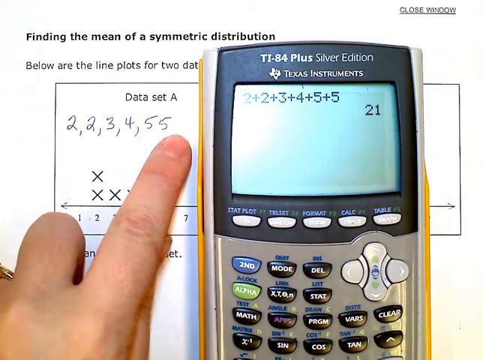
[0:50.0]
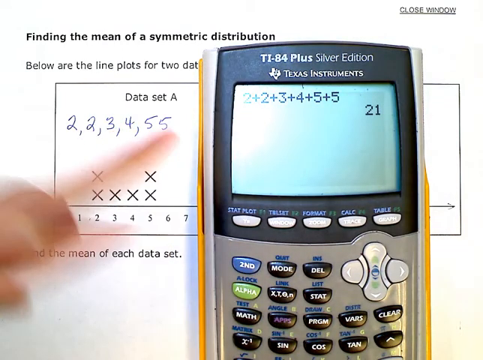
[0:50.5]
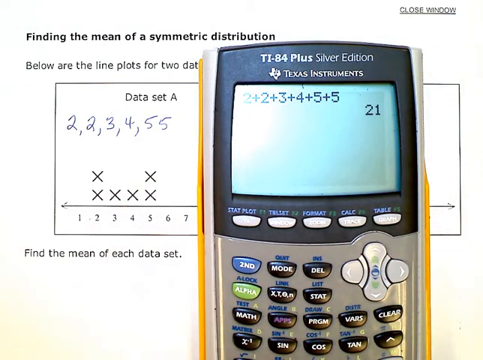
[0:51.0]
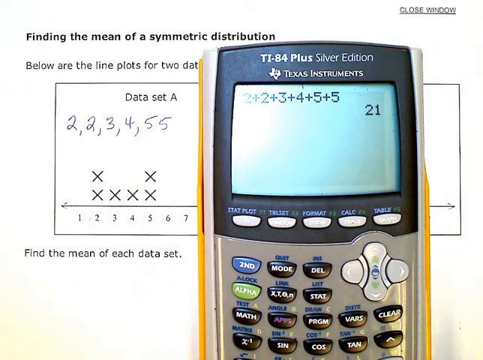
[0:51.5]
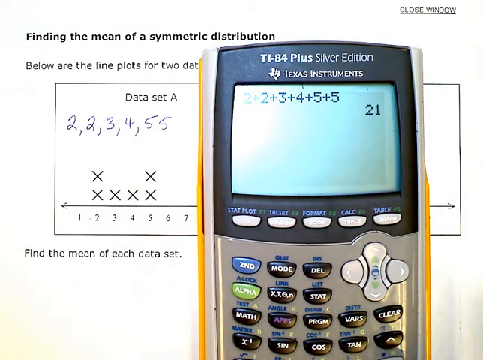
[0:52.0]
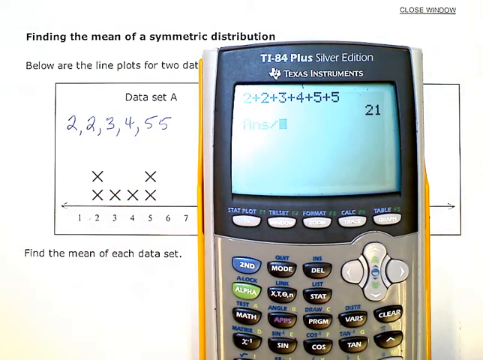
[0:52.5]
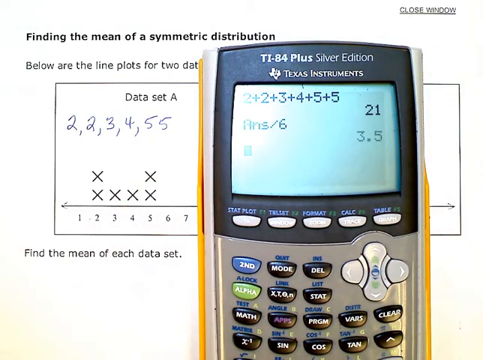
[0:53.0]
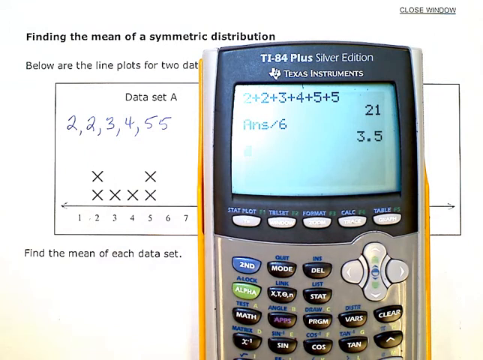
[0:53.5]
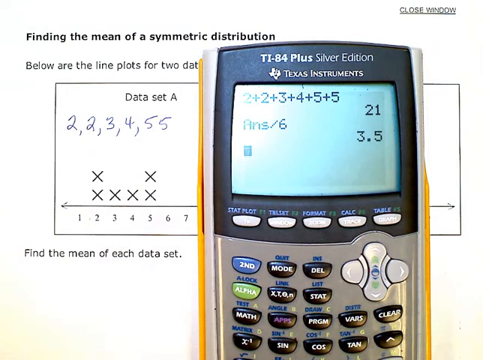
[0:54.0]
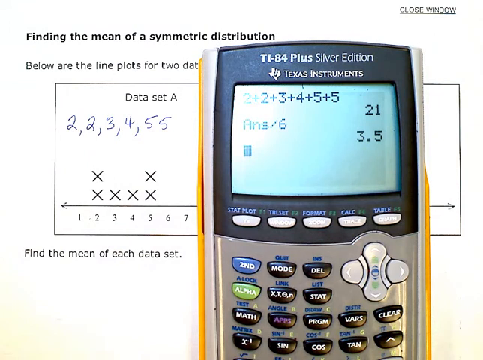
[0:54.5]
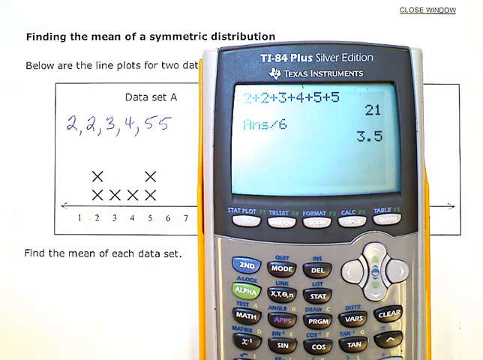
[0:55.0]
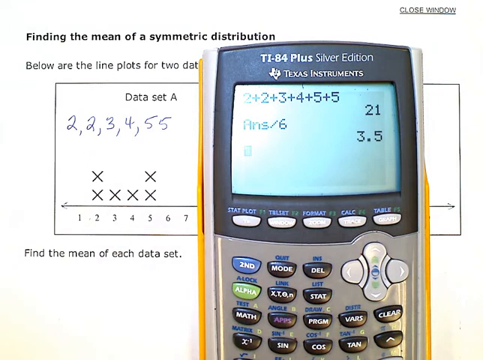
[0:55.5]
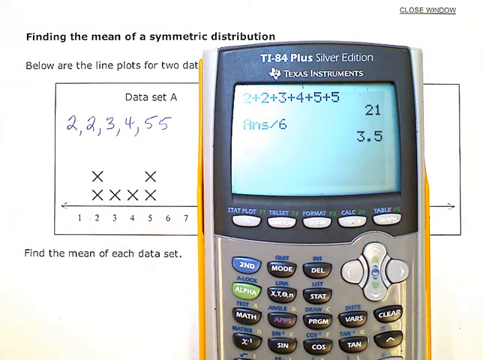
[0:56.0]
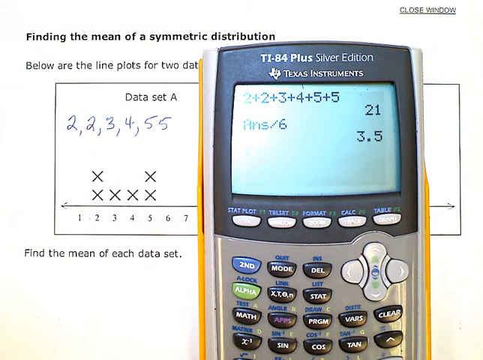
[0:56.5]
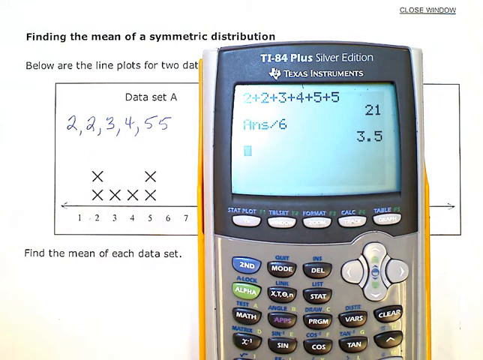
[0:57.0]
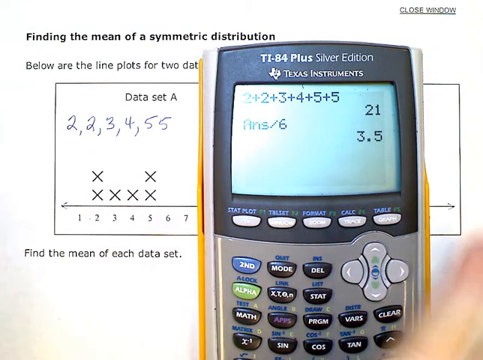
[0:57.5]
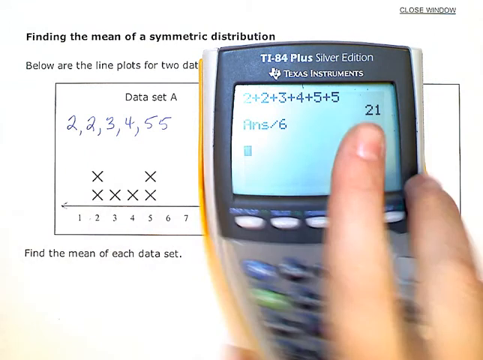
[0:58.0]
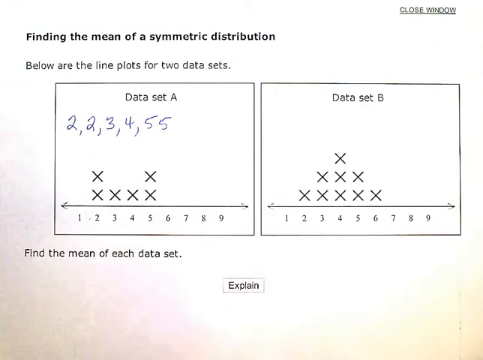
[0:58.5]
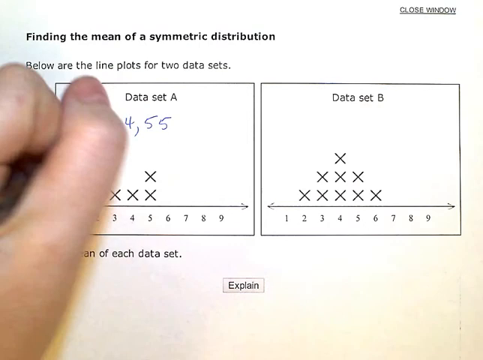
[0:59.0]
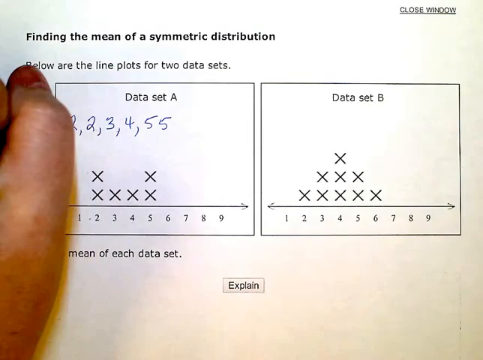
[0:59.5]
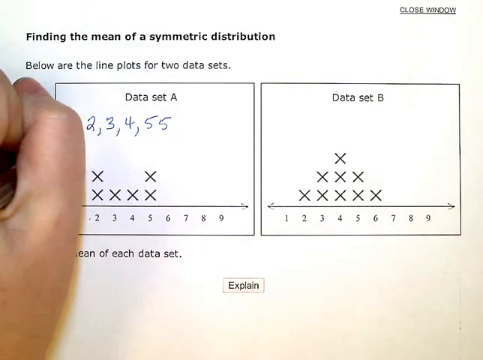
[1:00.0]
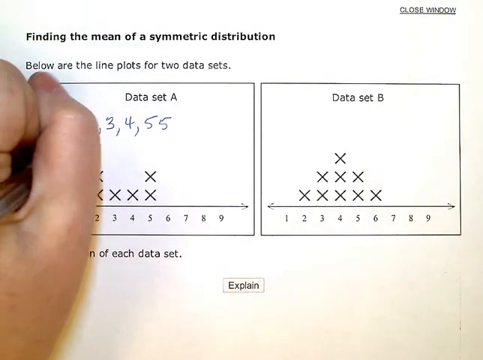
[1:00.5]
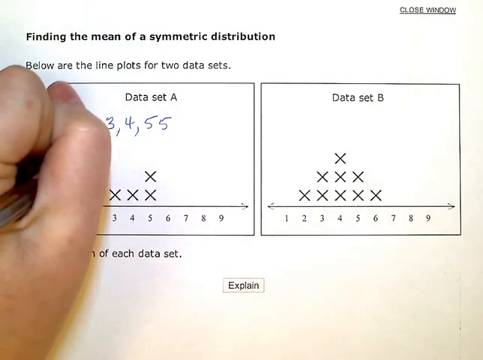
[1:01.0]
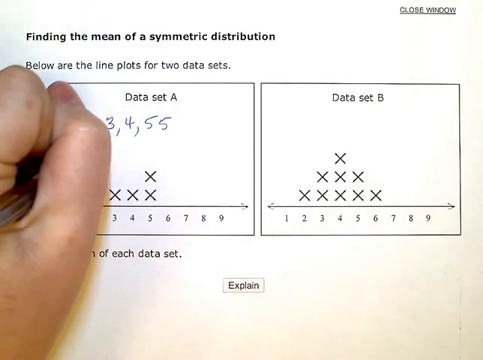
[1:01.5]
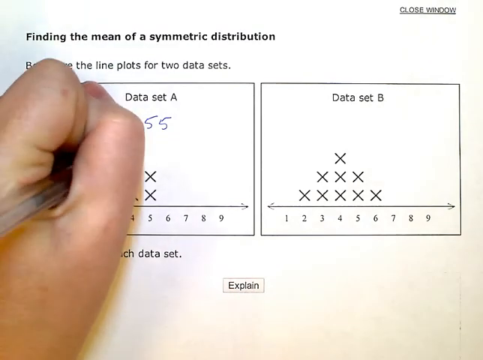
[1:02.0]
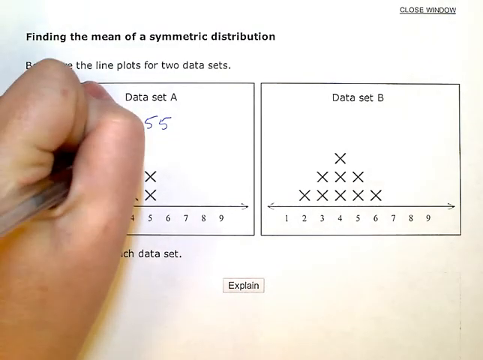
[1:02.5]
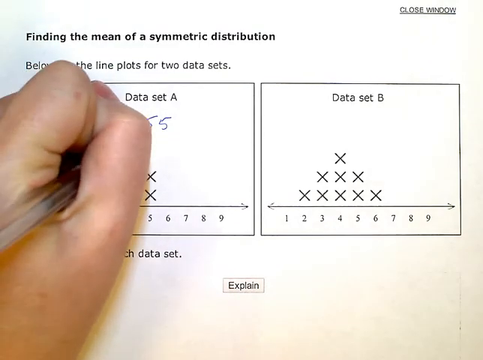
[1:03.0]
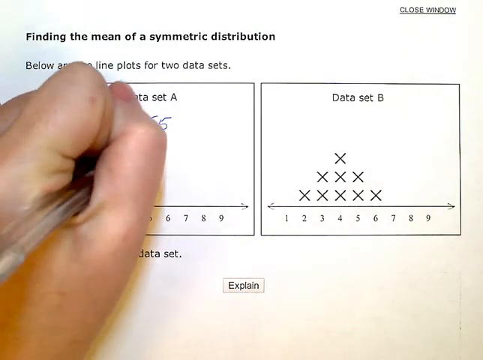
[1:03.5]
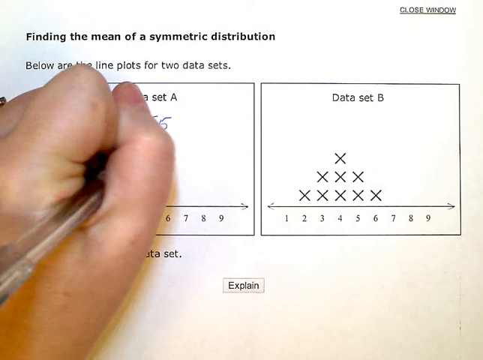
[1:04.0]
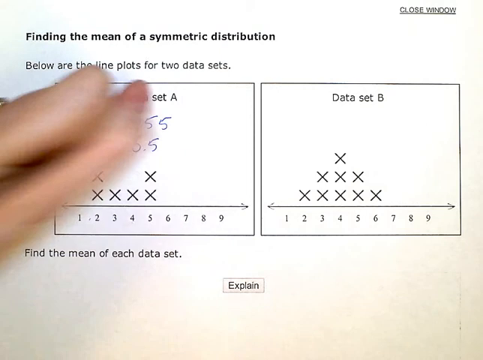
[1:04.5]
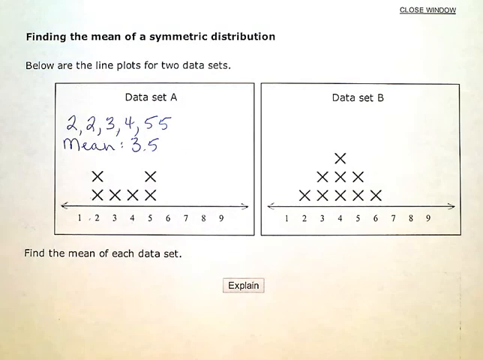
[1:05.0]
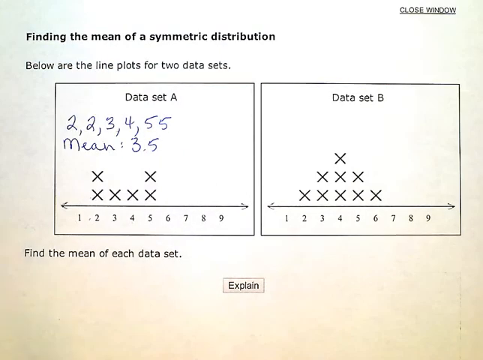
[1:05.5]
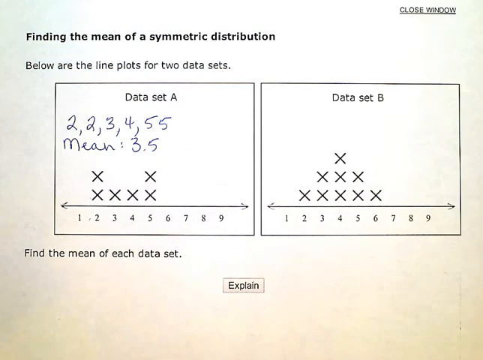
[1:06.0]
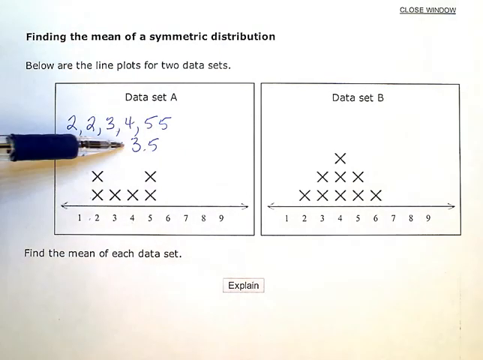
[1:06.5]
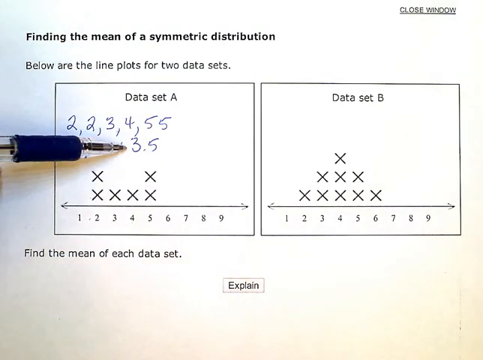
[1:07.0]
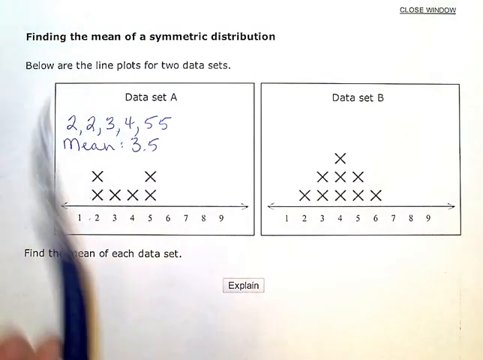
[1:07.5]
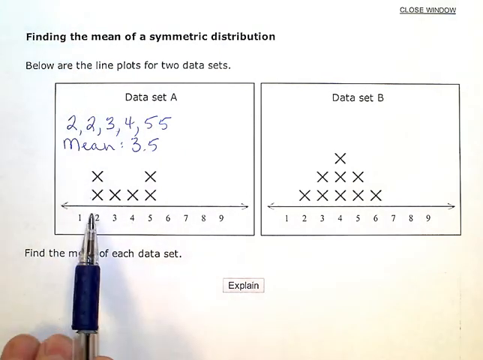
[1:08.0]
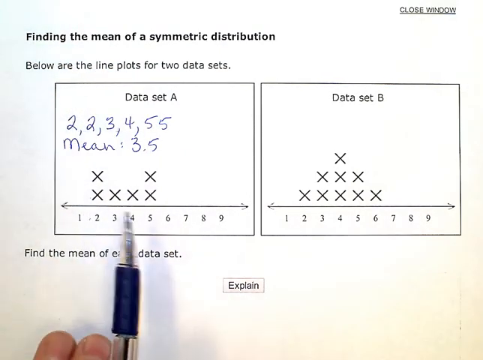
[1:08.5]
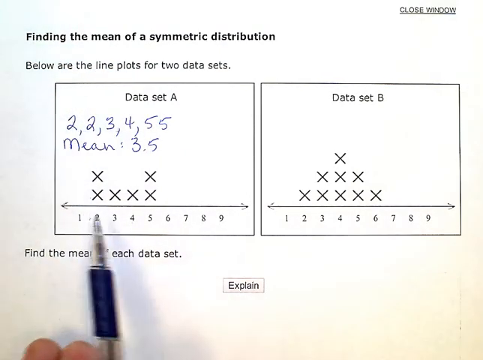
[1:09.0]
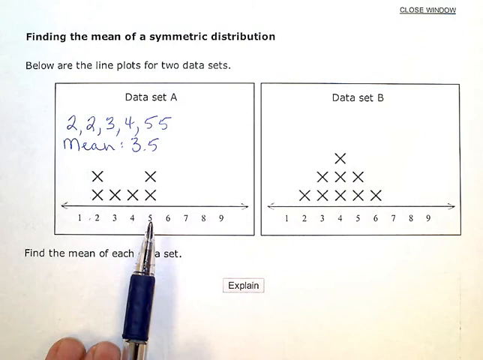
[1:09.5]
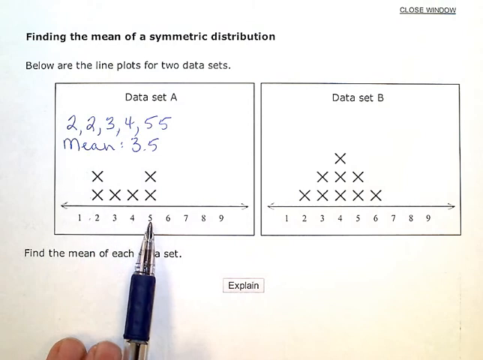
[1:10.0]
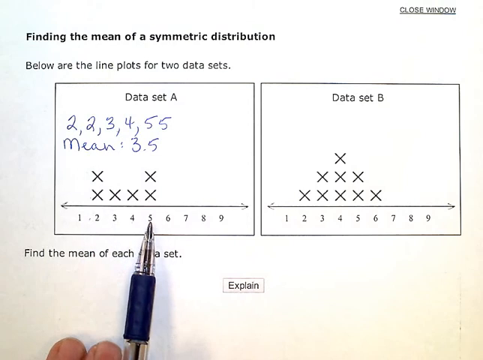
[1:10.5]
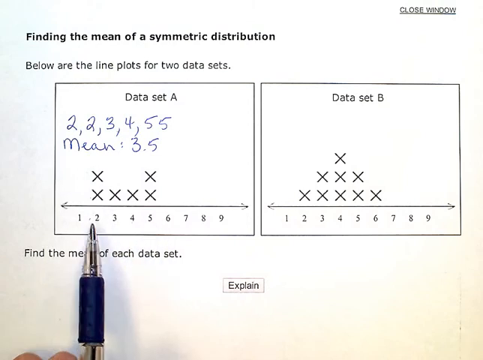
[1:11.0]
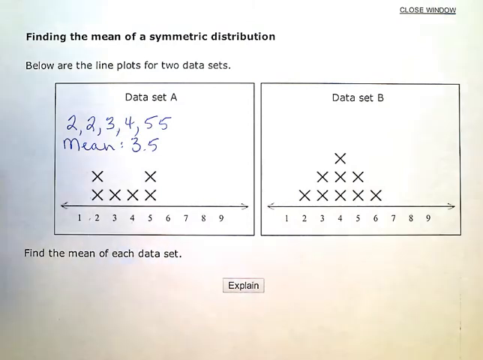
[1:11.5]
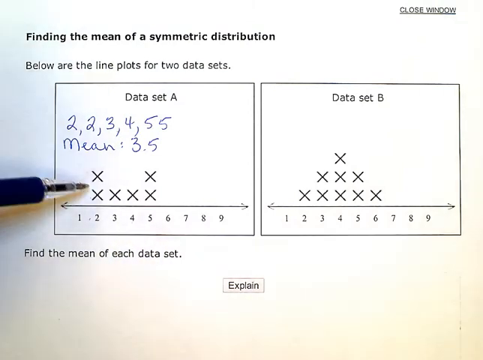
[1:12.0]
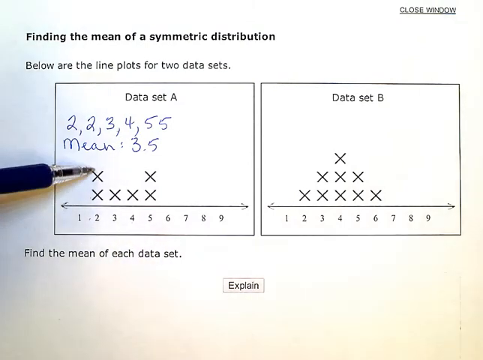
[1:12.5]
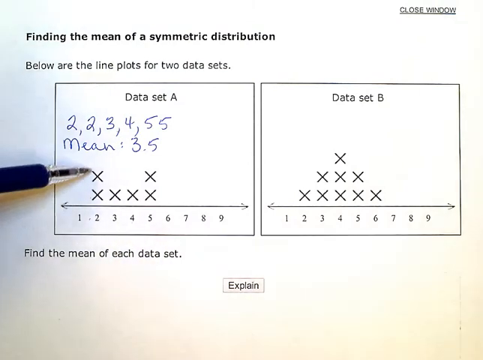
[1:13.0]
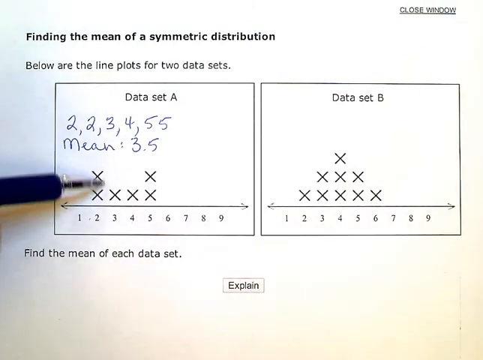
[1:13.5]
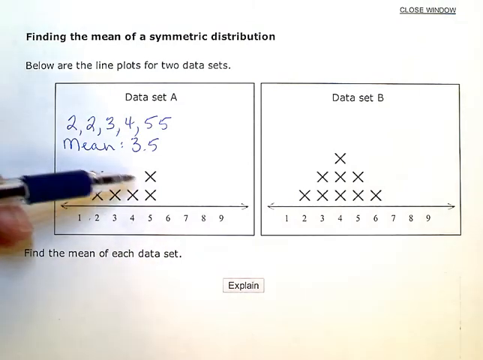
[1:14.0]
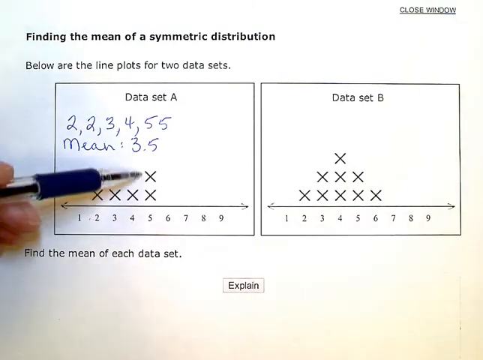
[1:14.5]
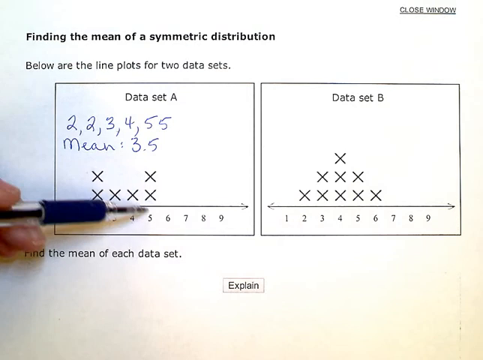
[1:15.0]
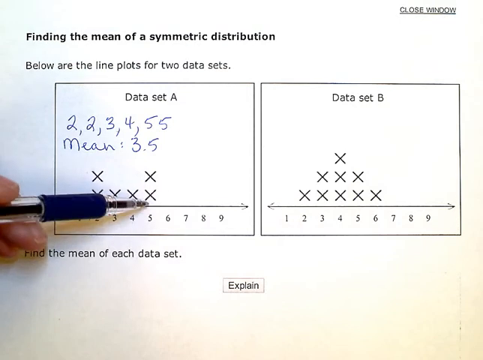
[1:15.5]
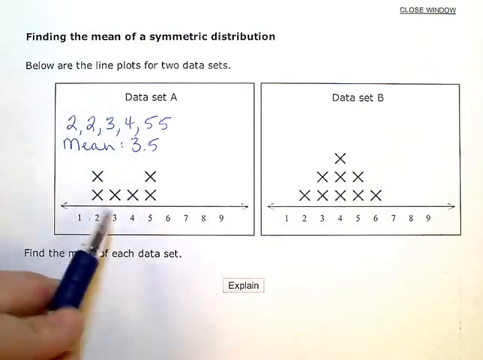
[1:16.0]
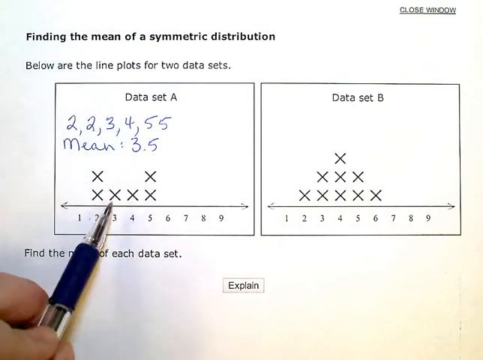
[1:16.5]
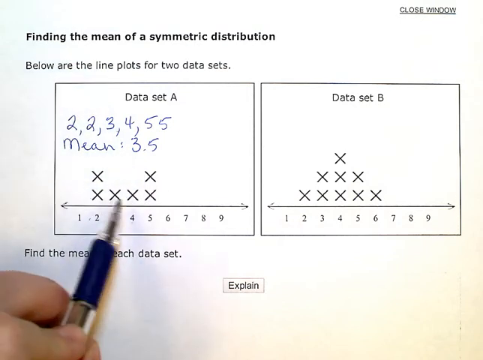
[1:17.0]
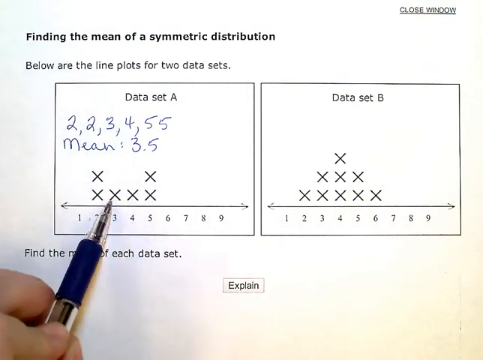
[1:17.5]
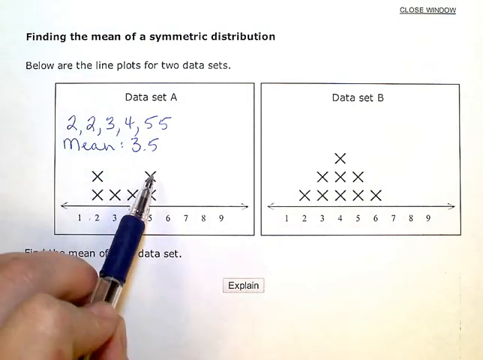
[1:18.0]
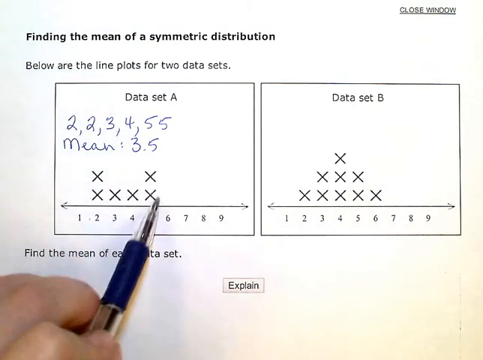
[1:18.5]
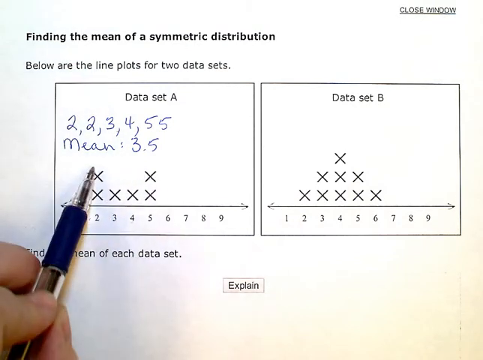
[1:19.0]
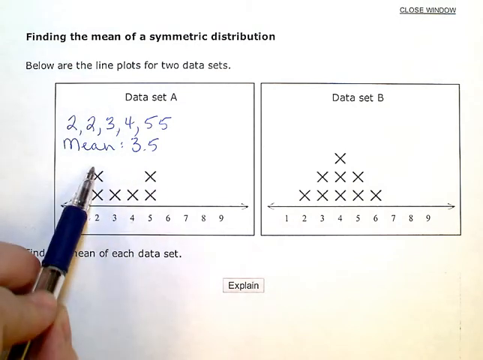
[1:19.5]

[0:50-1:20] She points to the x's, for example the two x's at the bottom, pointing and then writing, and shows on the calculator how to add them up. Beneath that on the calculator screen it shows "answer/6", dividing the 21 by six to get 3.5, and a marker underneath blinks very quickly. She pulls the calculator away and writes underneath, apparently with her left hand. When she takes her hand away, it says "mean: 3.5". Using her ballpoint pen, she goes through the data from 2 to 5, skipping the values with no data, and goes through each column of x's once more. Each value has one x except 2 and 5.